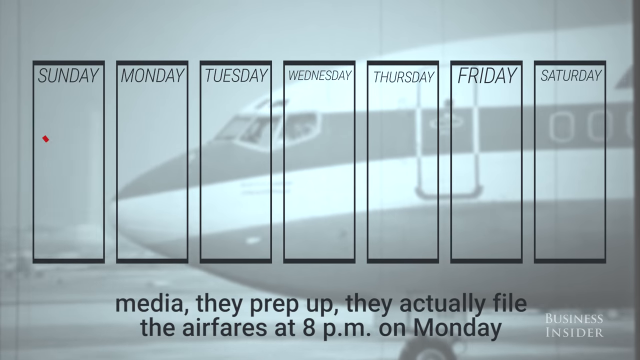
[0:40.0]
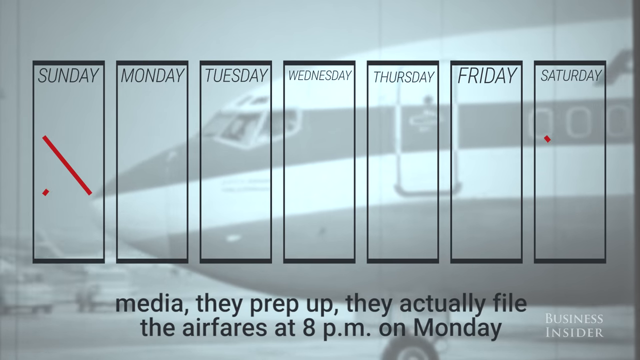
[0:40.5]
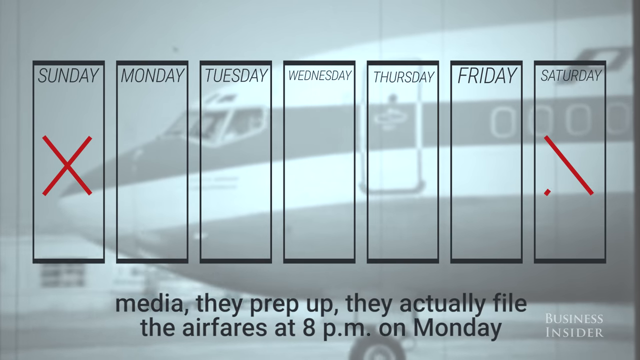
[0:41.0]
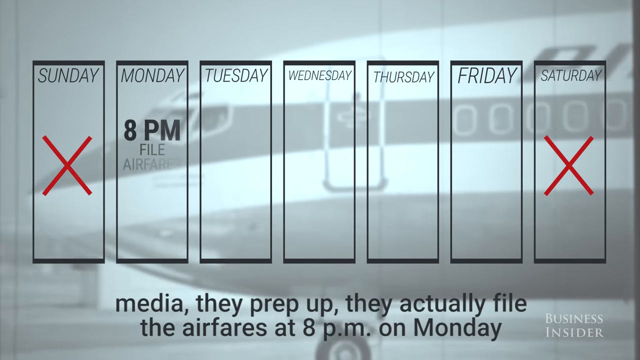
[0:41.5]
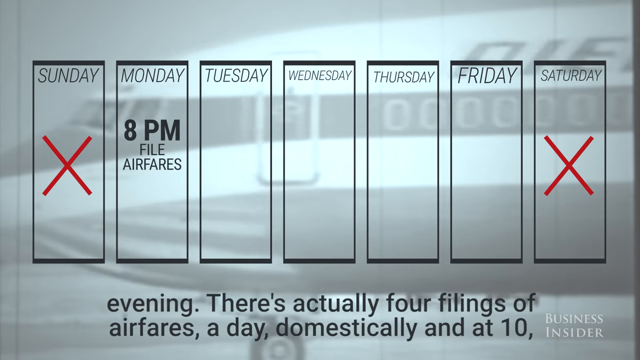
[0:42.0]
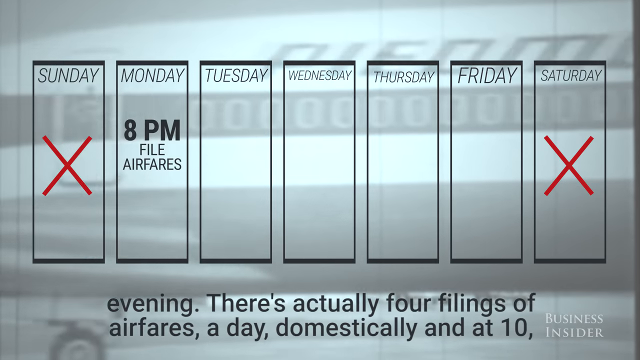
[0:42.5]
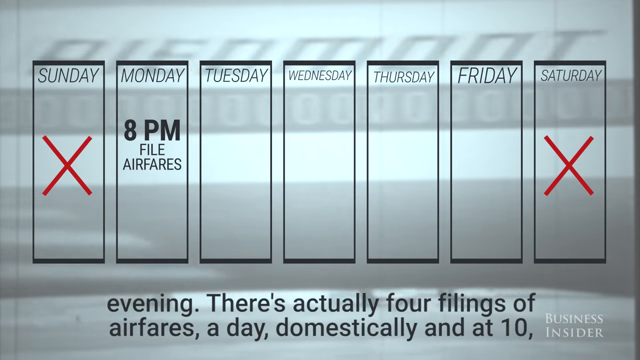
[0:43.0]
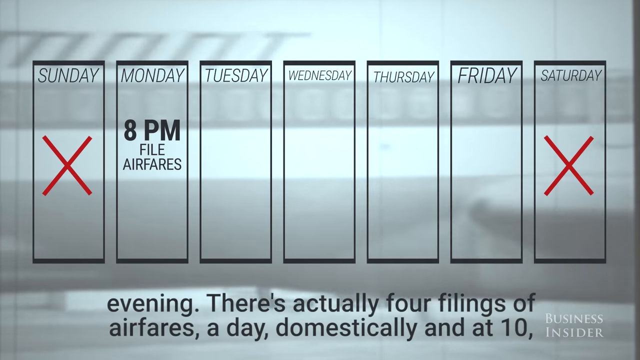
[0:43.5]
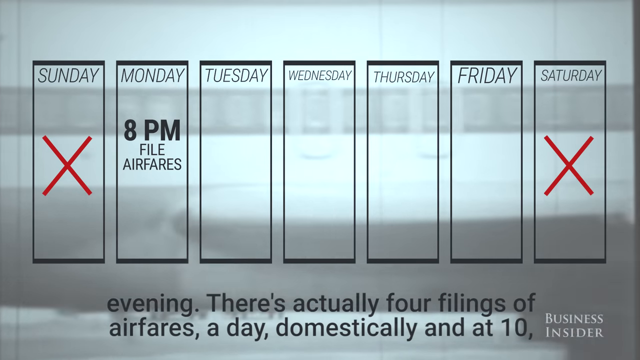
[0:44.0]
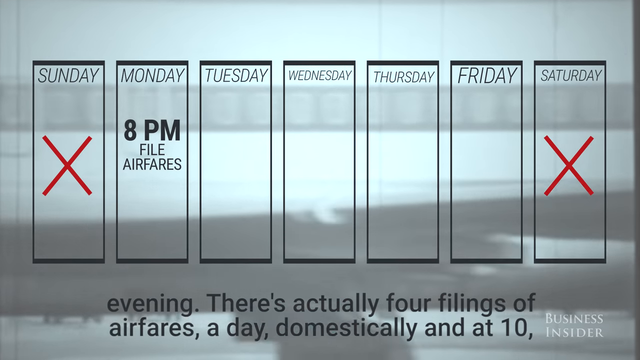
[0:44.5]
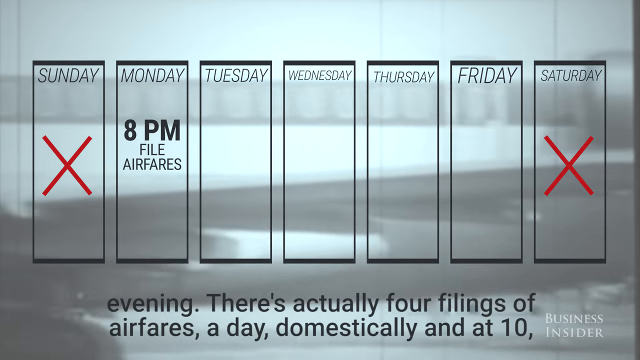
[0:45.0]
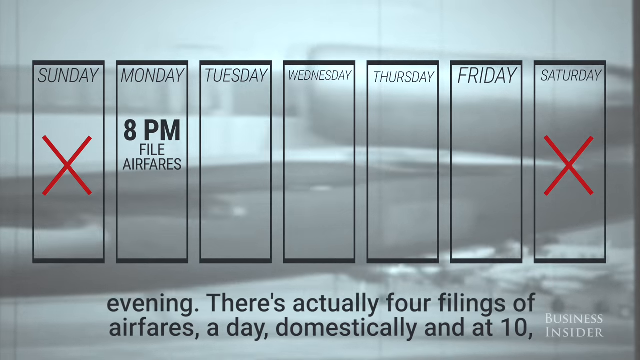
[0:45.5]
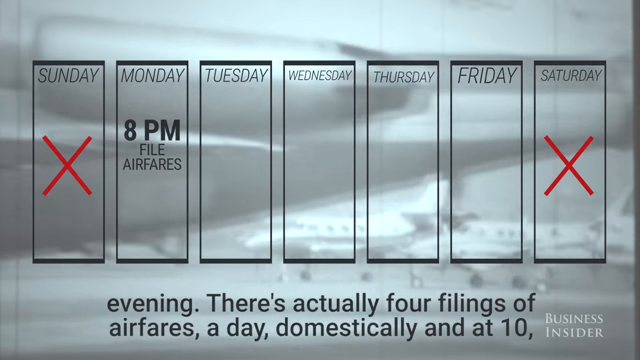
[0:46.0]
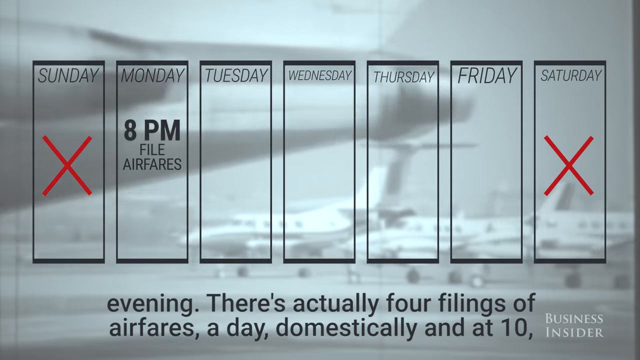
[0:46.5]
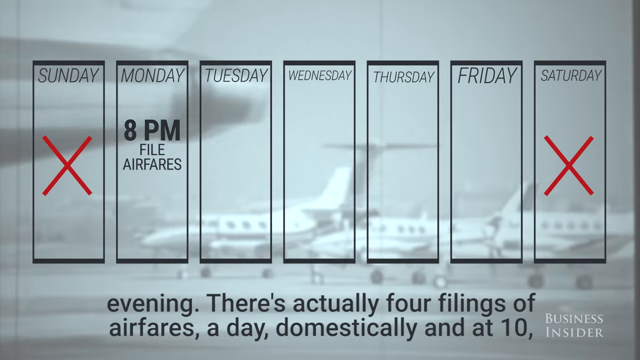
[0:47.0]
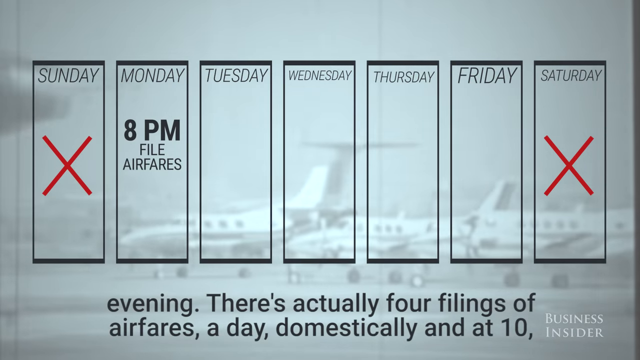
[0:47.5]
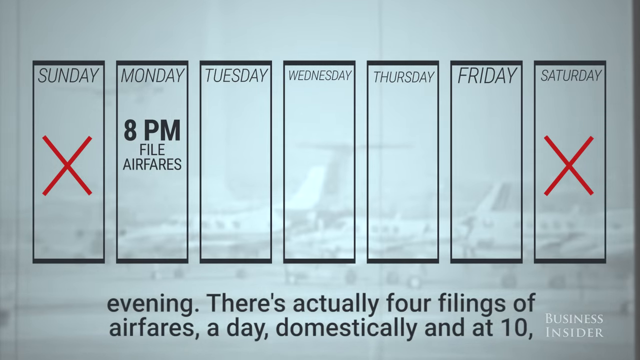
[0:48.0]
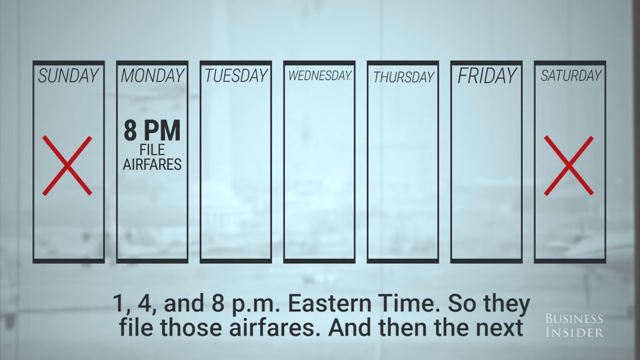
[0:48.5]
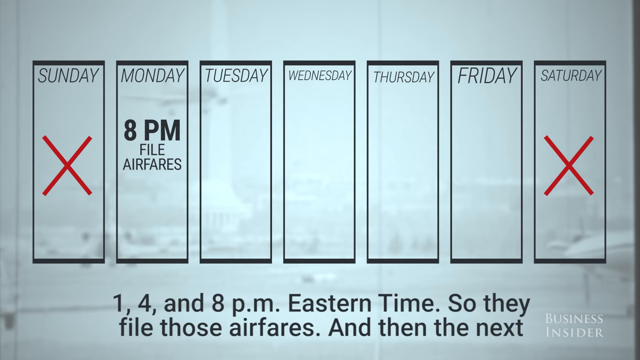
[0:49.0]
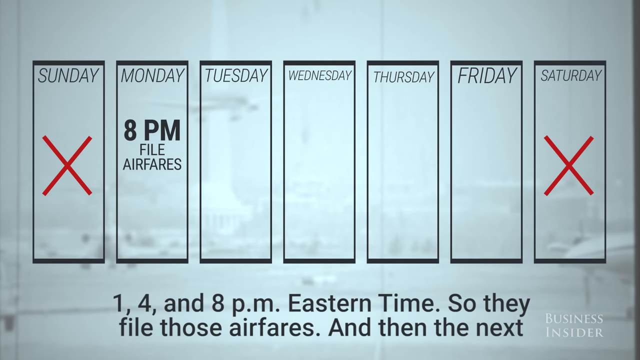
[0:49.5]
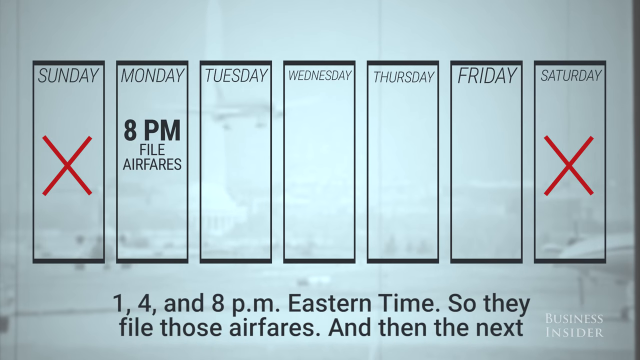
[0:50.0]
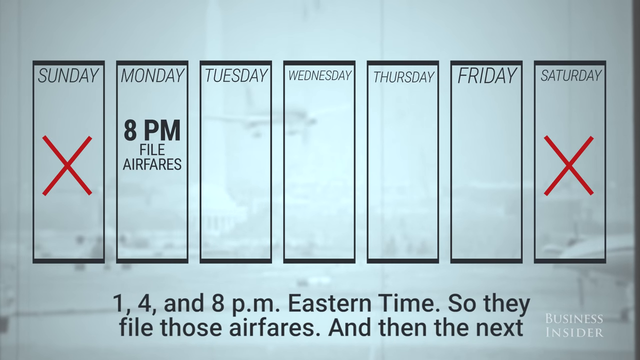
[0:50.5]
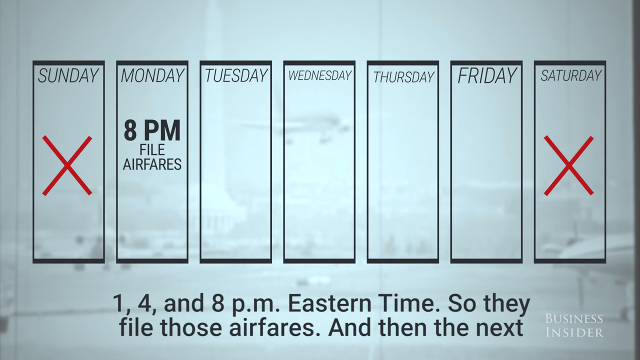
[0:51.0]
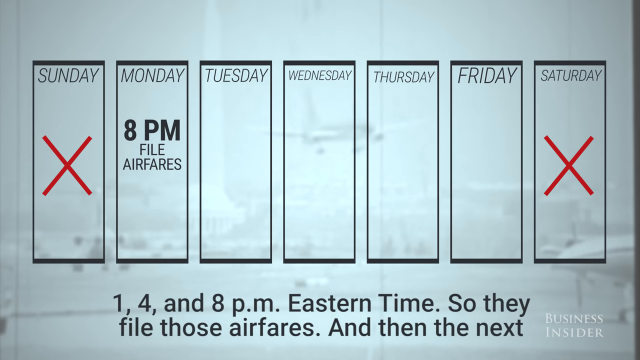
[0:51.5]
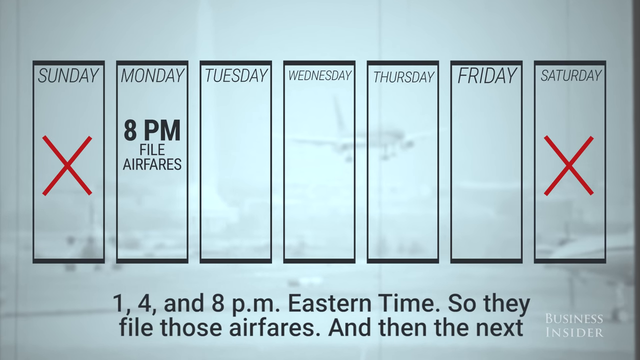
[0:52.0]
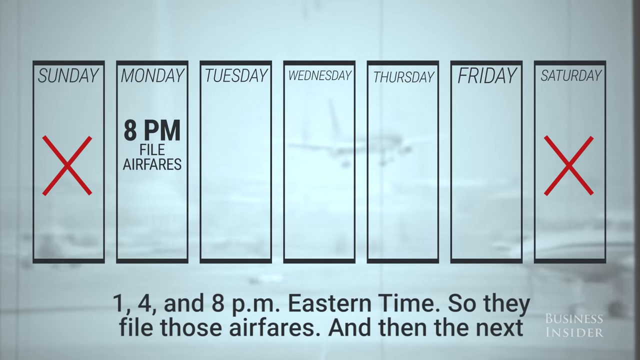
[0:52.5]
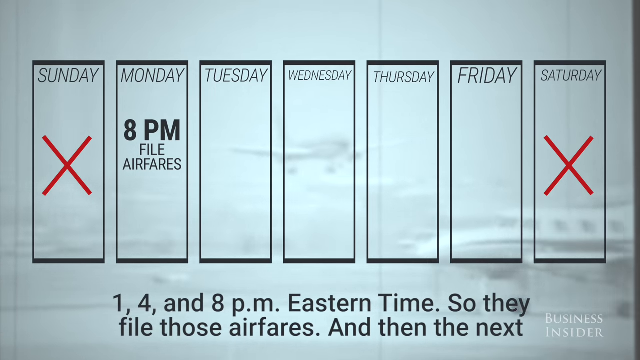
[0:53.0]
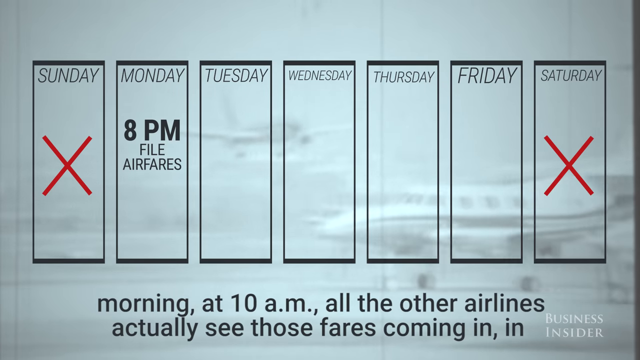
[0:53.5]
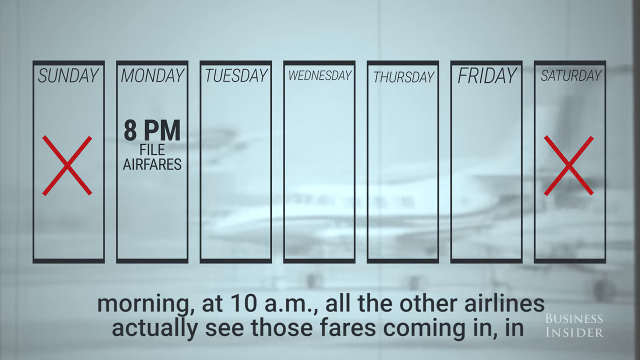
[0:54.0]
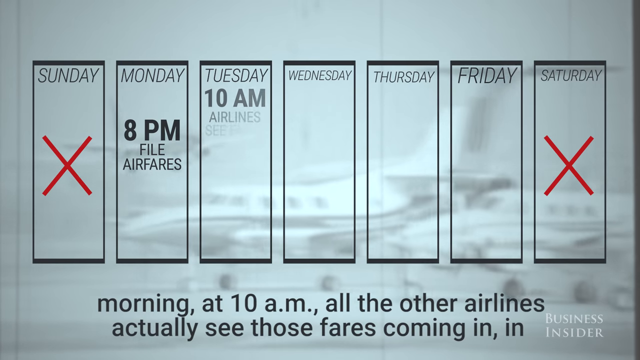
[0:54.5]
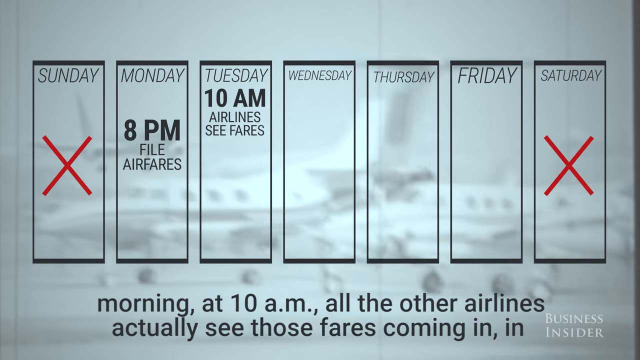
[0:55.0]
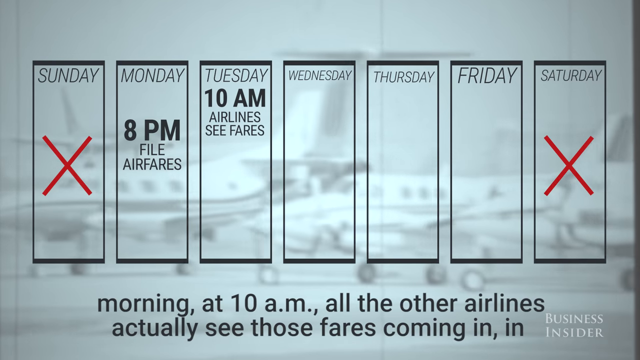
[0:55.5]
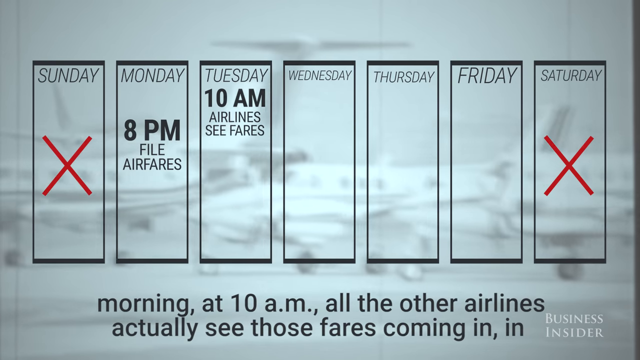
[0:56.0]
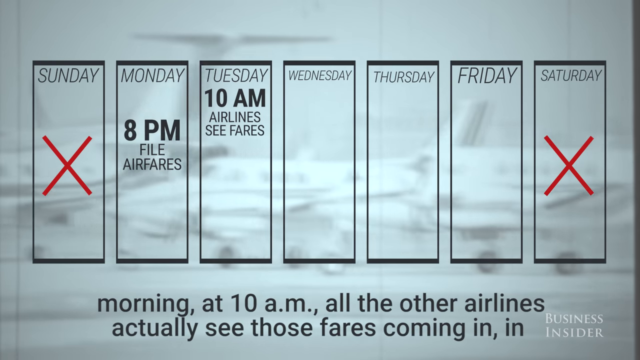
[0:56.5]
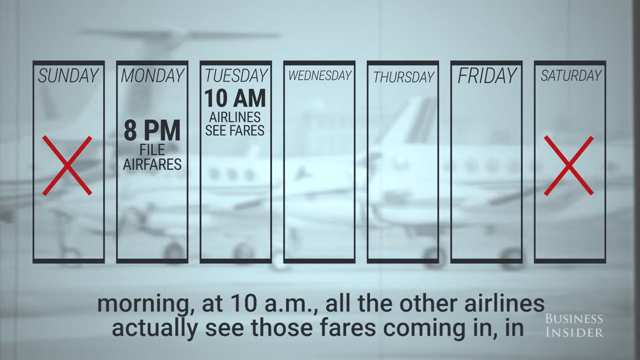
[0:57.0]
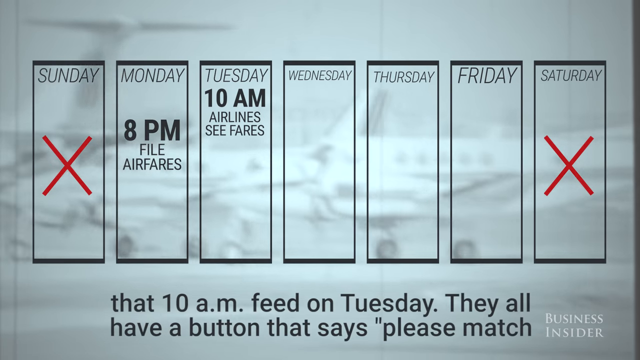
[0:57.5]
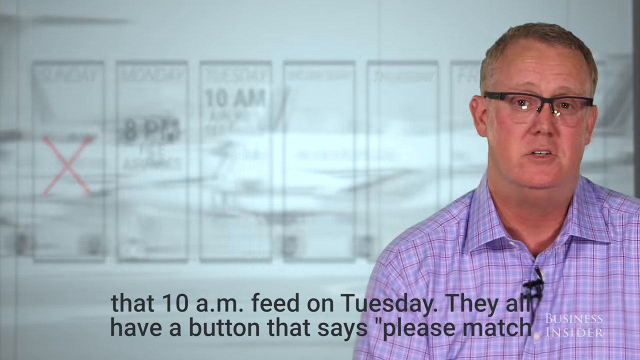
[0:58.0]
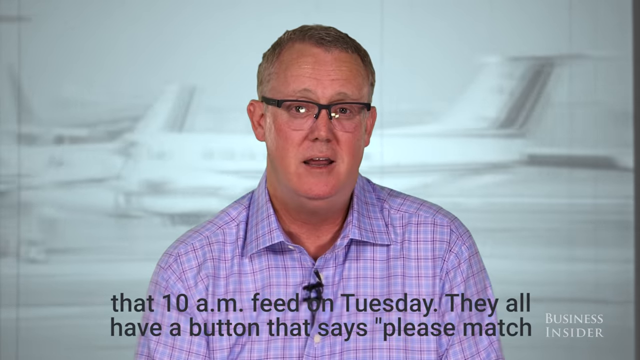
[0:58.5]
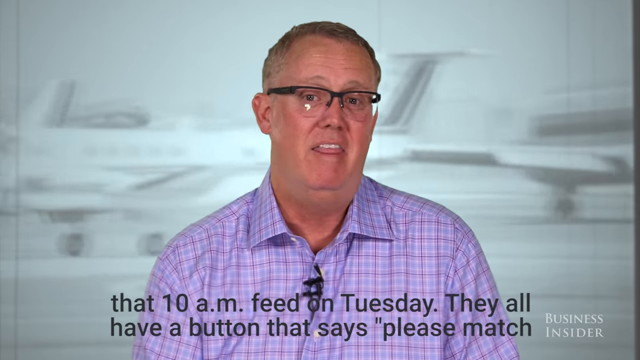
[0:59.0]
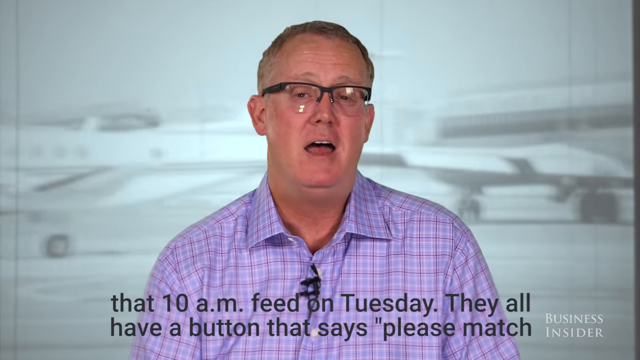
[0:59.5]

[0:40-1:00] The Business Insider video continues on how to get the cheapest airfare prices during the week. Subtitles at the bottom of the screen read: "media. They actually file the airfares at 8pm on Monday evening. There's actually four filings of airfares a day domestically, and at 10, 1, 4, and 8pm Eastern Time. So they file those airfares, and then the next morning at 10am, all the other airlines actually see those fares coming in. At that 10am feed on Tuesday, they all have a button that says, please match." Various data points appear, including a calendar showing the days Sunday through Saturday in black rectangular boxes, and a rectangular box shows on what dates and at what times airfares are being filed. Days with red X's in the rectangles are days when airfares are not being filed.